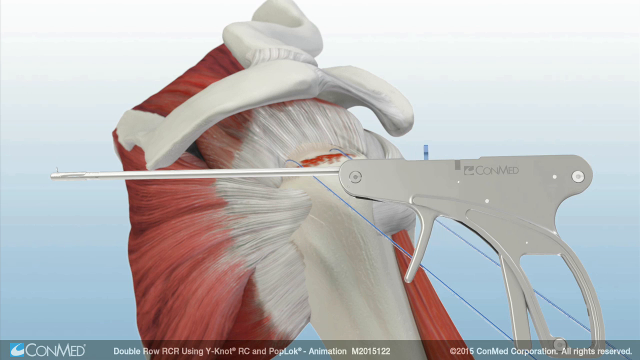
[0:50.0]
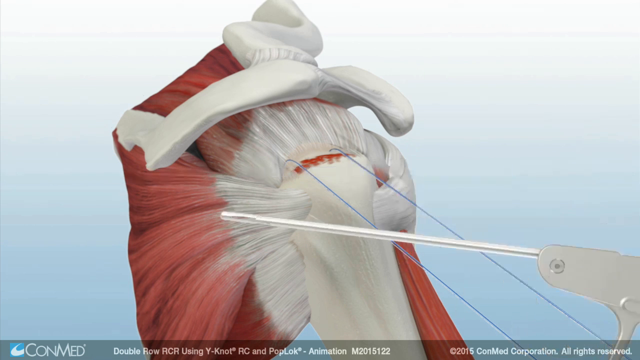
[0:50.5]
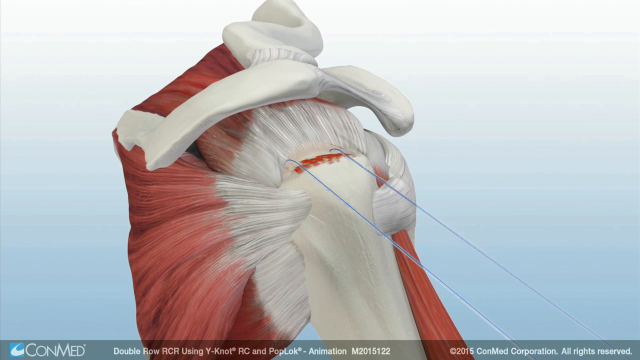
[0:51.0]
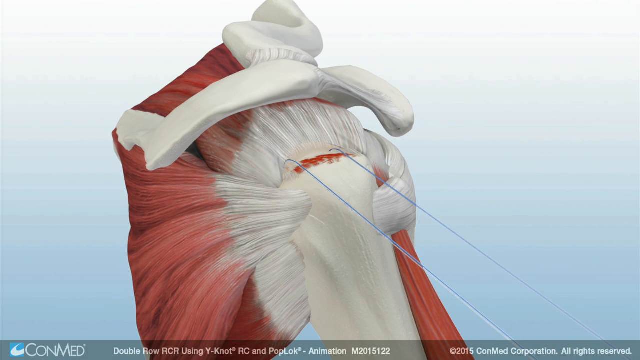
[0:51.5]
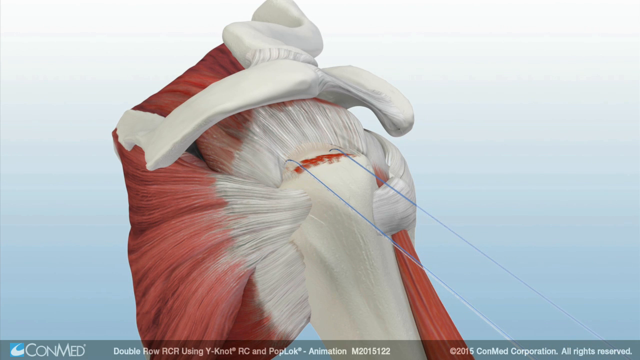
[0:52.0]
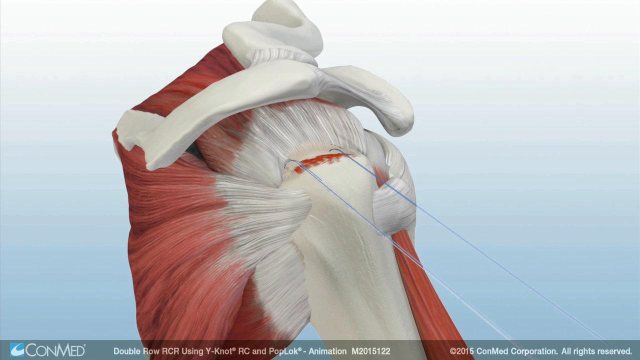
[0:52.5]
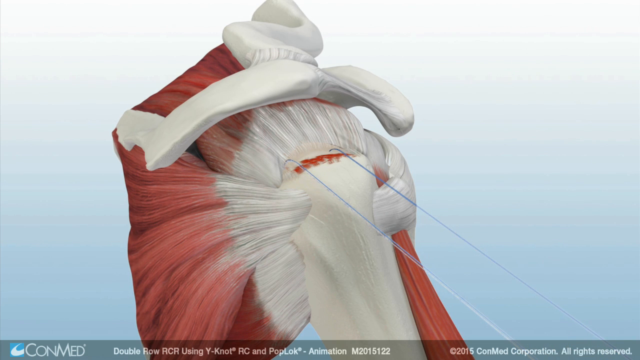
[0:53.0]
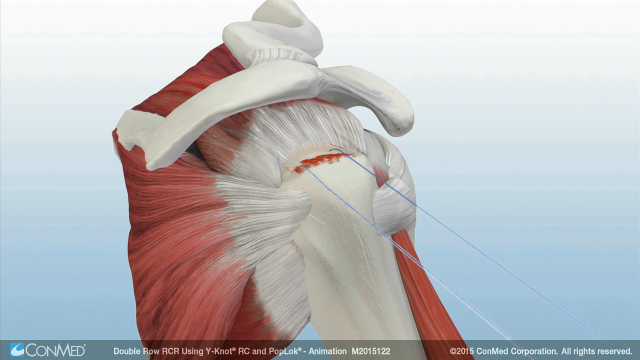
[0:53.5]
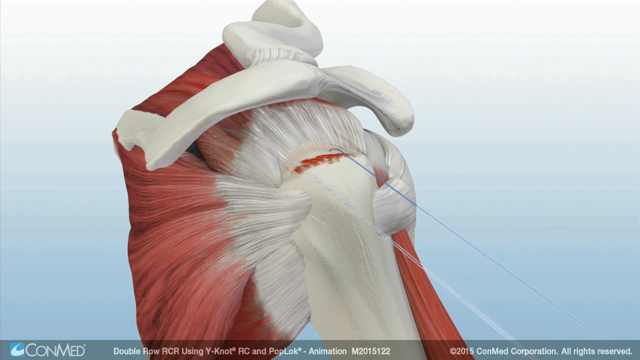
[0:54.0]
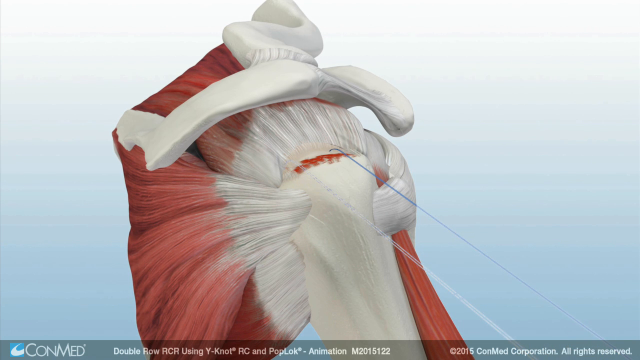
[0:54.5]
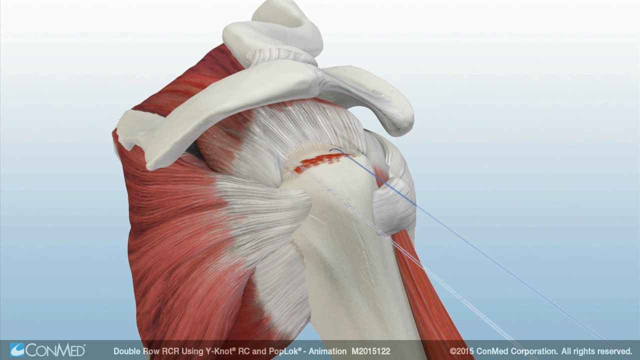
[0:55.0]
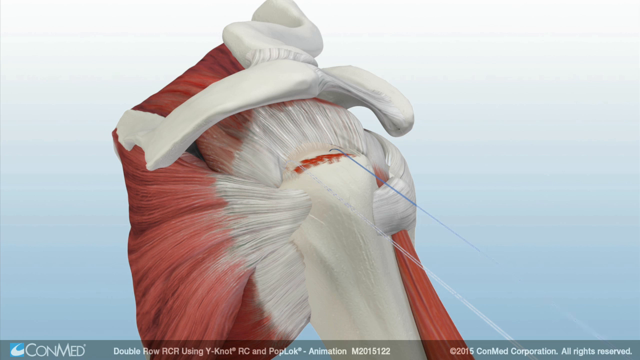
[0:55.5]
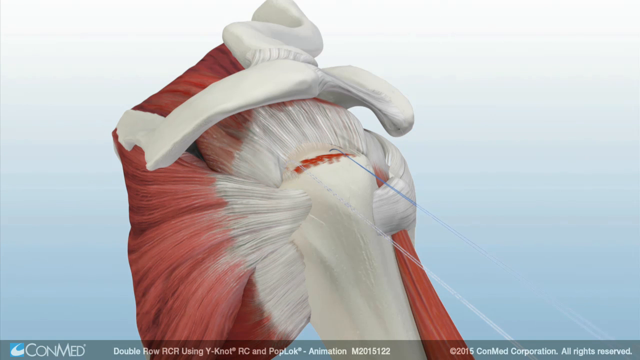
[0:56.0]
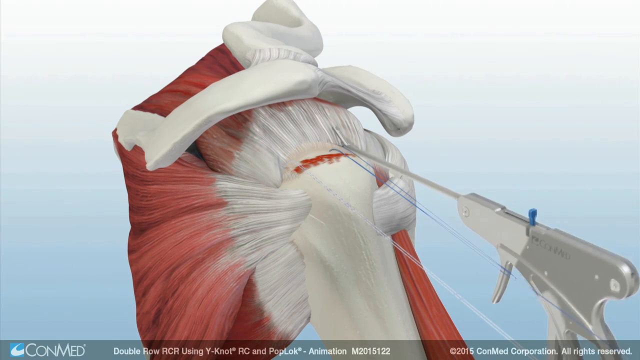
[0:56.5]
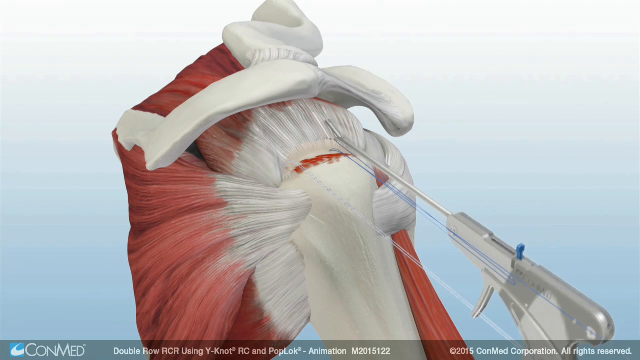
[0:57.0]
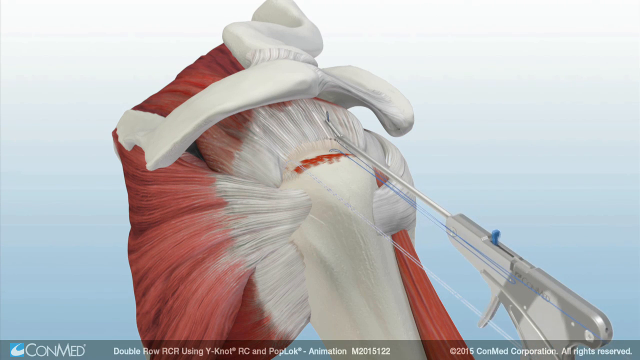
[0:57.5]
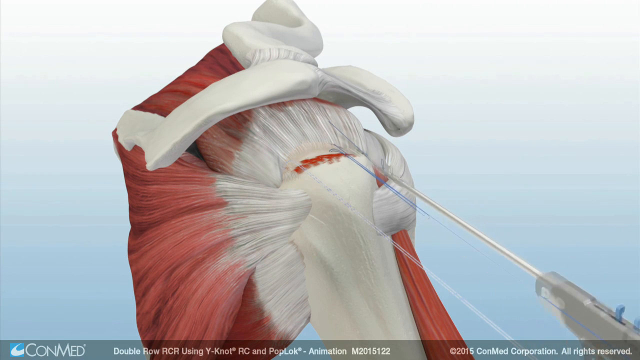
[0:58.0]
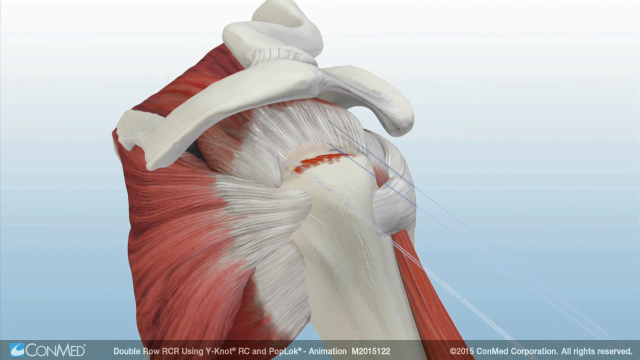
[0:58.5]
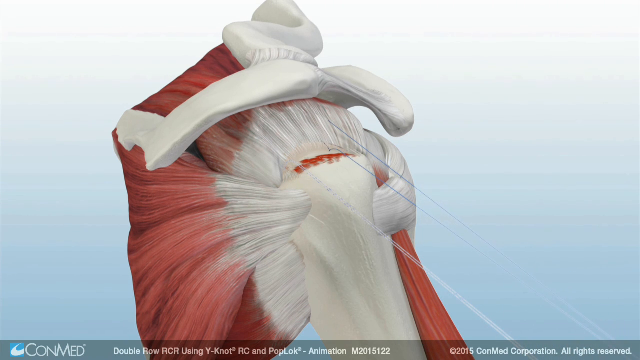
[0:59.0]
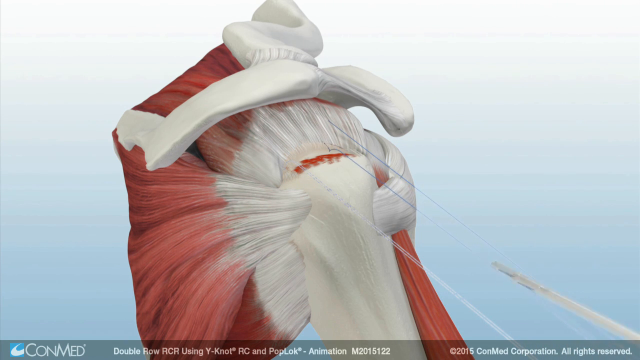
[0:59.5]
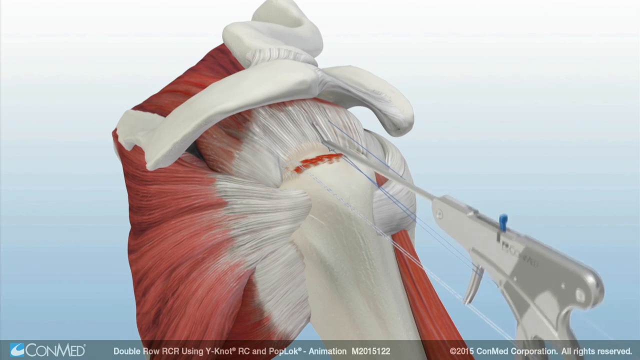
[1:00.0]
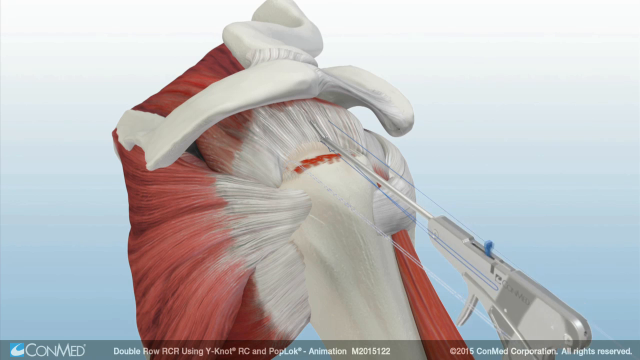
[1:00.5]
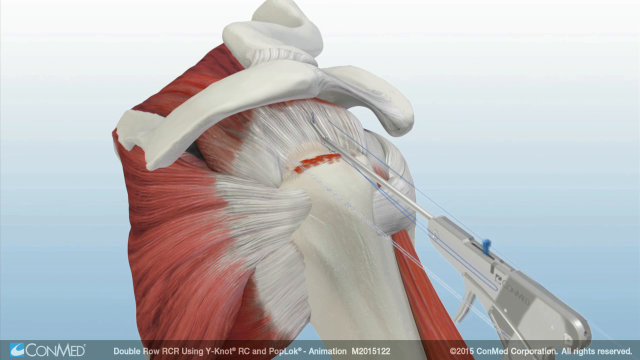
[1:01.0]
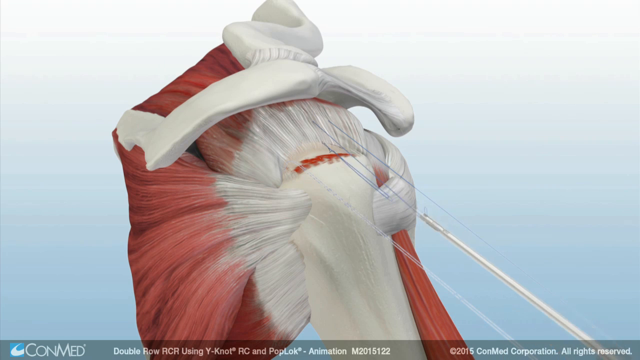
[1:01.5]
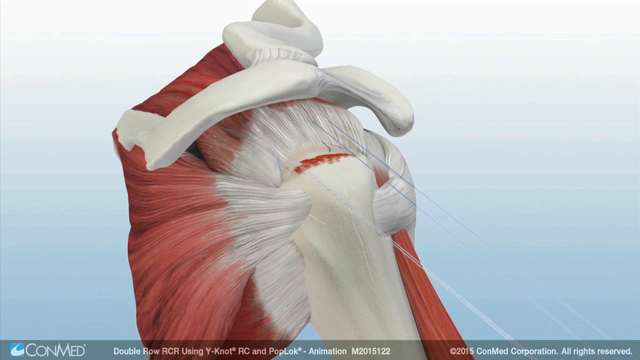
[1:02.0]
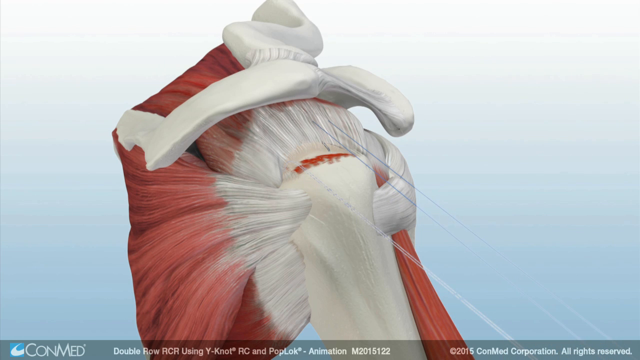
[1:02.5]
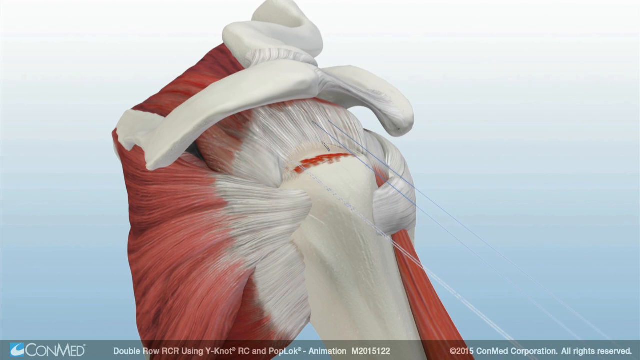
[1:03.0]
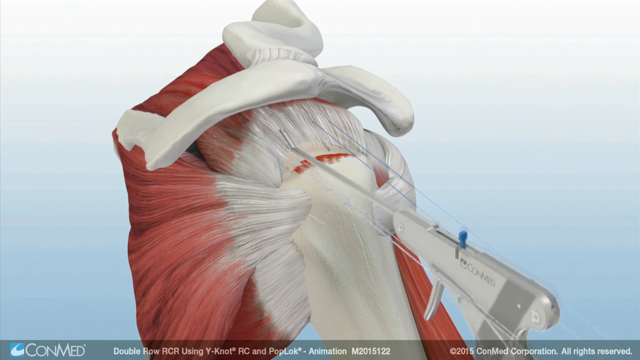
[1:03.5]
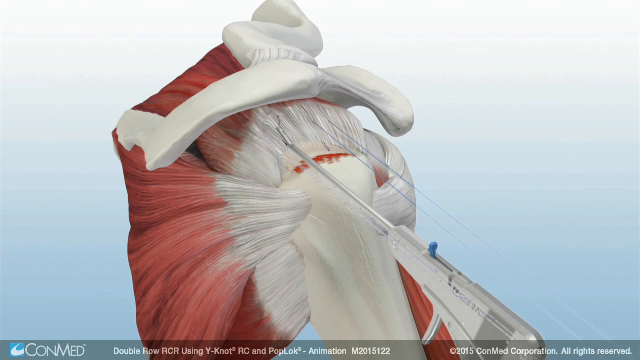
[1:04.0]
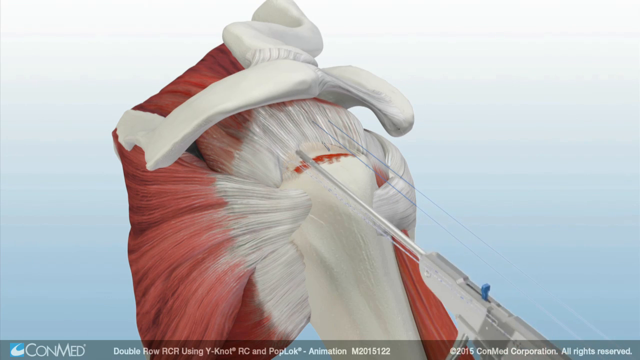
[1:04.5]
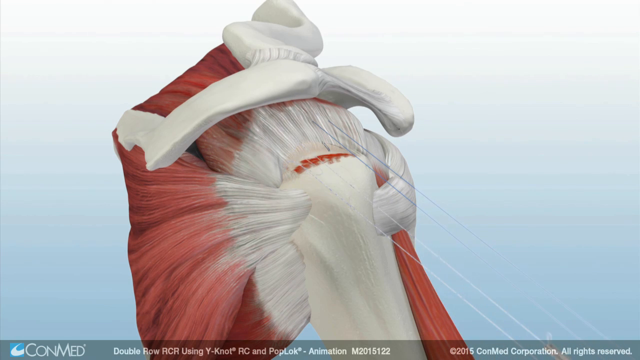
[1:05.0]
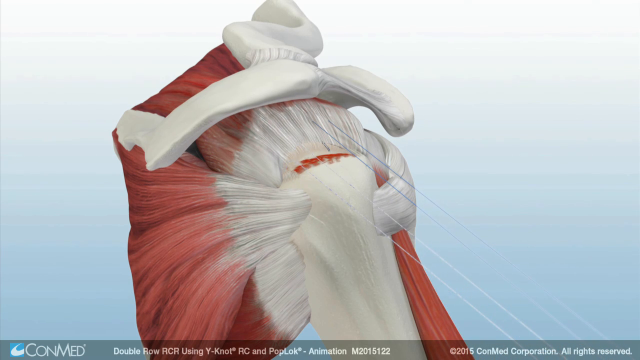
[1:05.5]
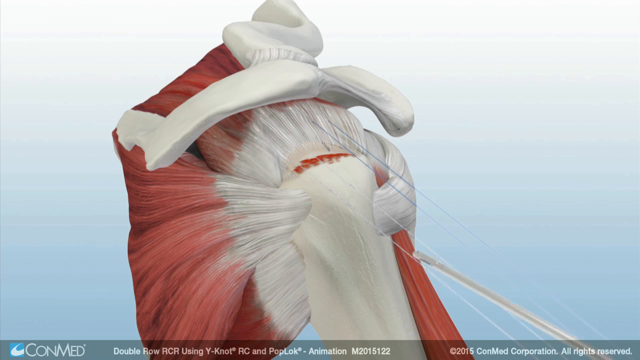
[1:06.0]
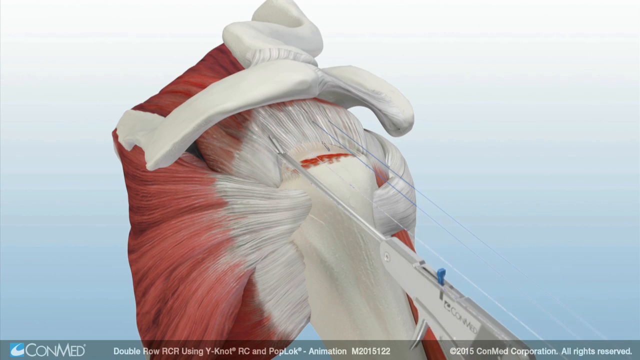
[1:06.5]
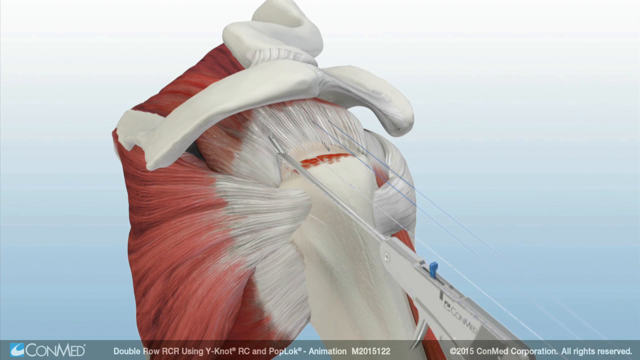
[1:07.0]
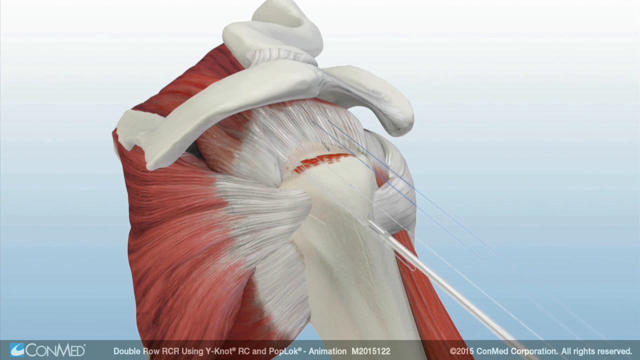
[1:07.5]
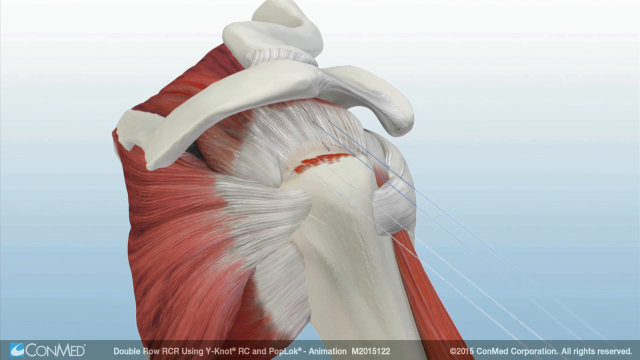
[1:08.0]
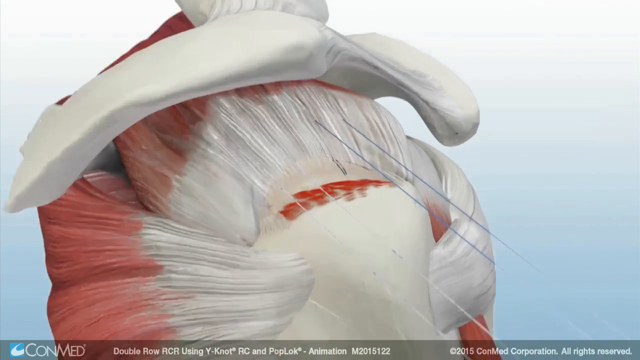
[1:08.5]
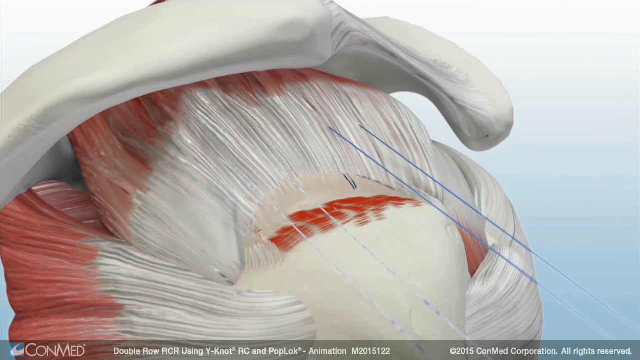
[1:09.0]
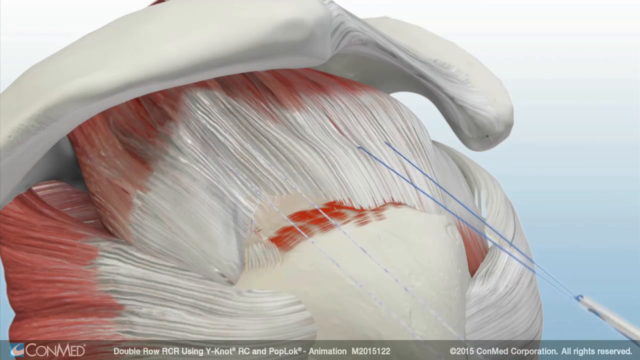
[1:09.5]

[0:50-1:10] An animated illustration shows a surgical procedure on the tendons and bones of the shoulder sockets. A surgical tool shaped like a gun with a trigger and a long pointed sharp rod is used. The illustration shows the shoulder with the muscles and tendons attached to the upper arm, and the shoulder clavicle bone above it. Two blue surgical threads hang out of the shoulder sockets where the tendon is attached. The gun-shaped tool is used with the blue threads to suture the tendon onto the upper arm bone, and the tendons are pulled back into place. The muscles are dark pink, the tendons are off-white, and the bones look very white. The tool is pale gray, the surgical threads are medium blue, and the background is a very pale sky blue.